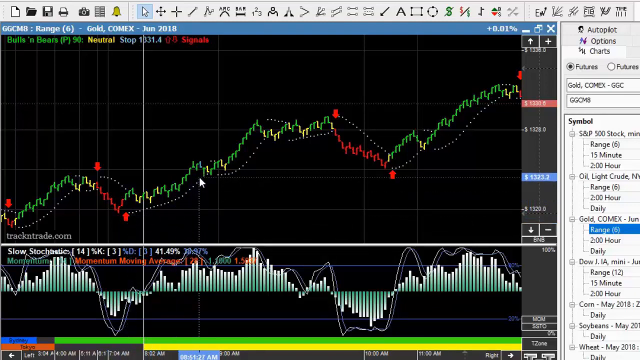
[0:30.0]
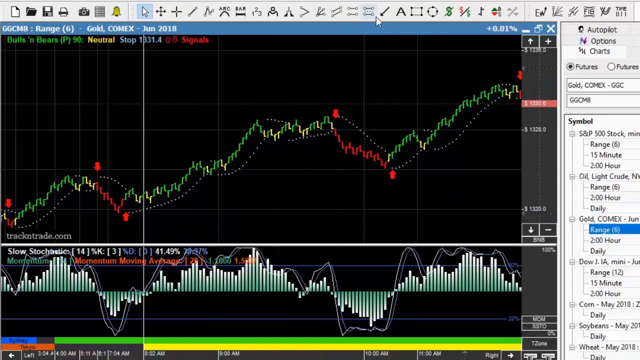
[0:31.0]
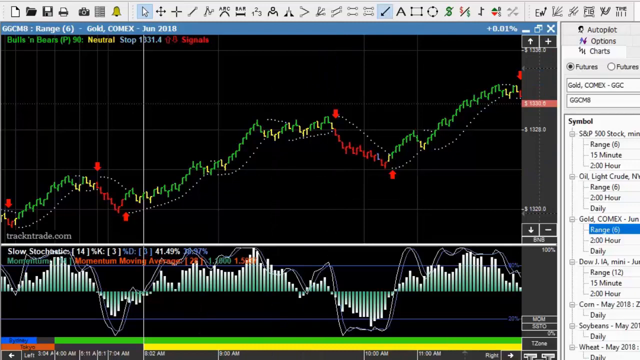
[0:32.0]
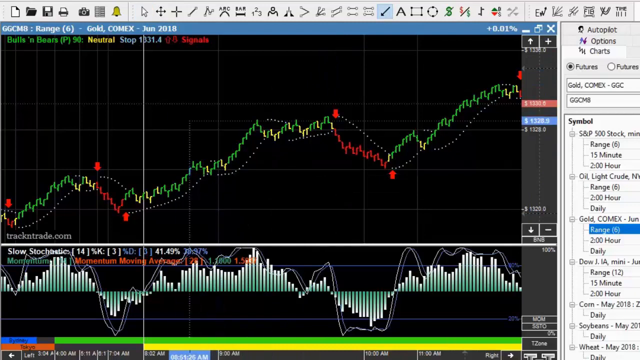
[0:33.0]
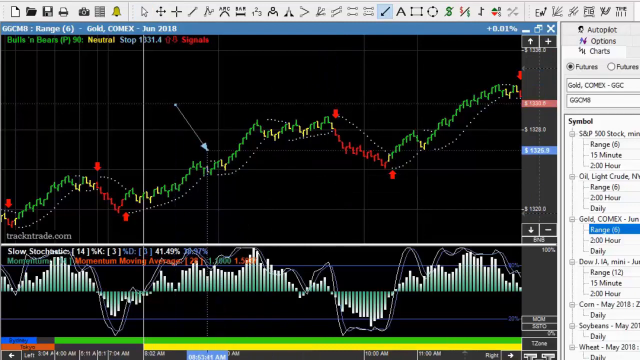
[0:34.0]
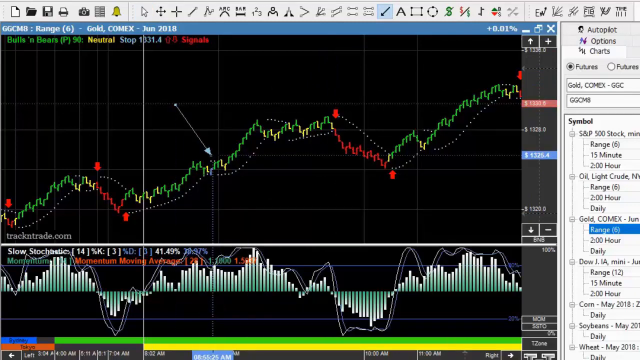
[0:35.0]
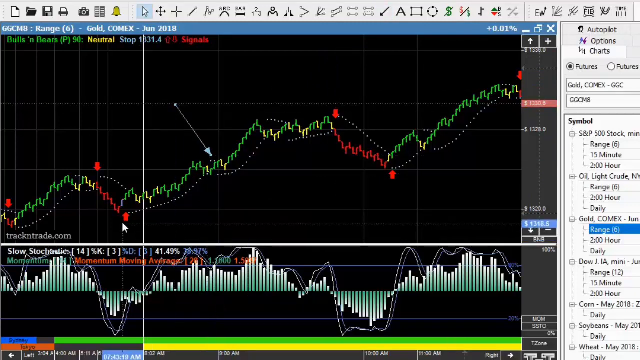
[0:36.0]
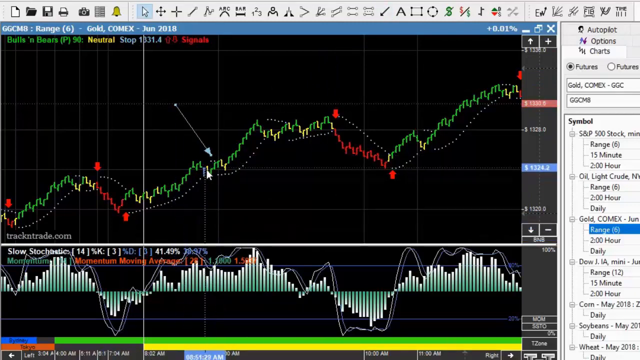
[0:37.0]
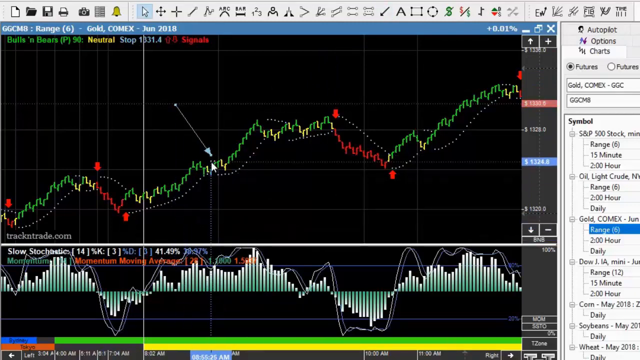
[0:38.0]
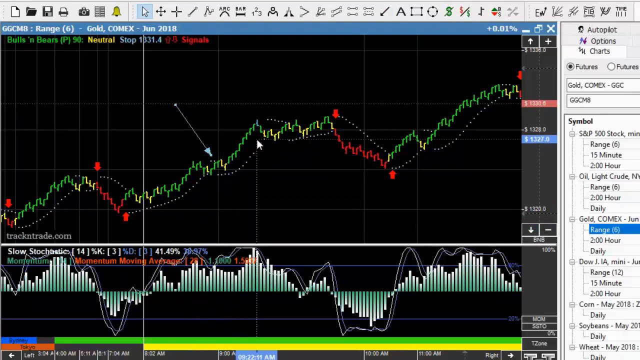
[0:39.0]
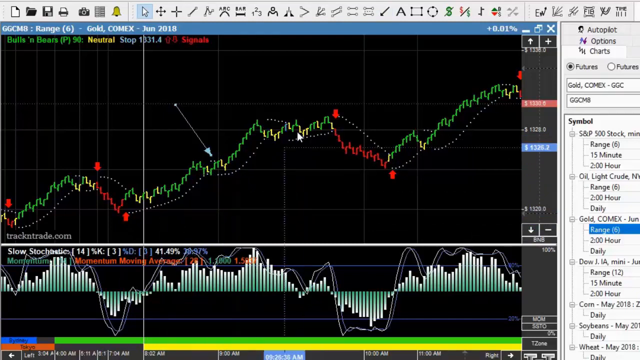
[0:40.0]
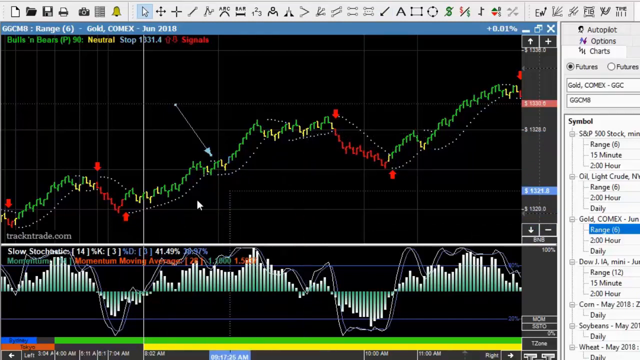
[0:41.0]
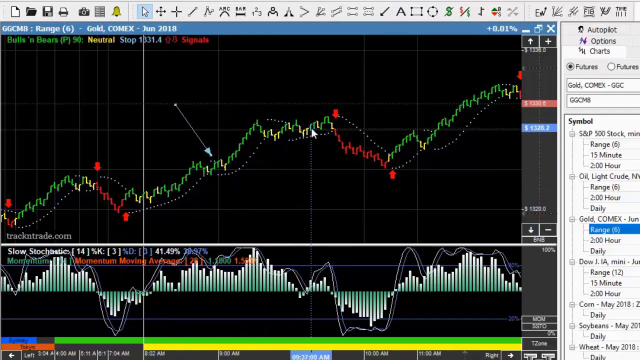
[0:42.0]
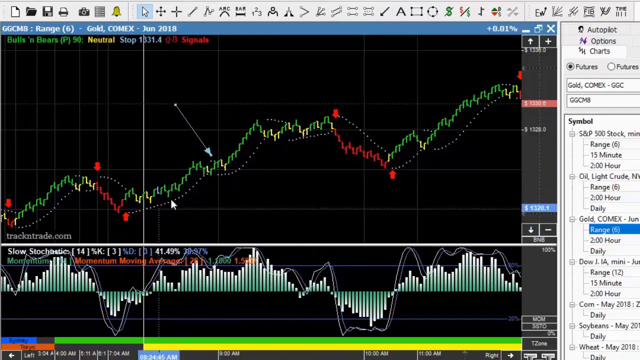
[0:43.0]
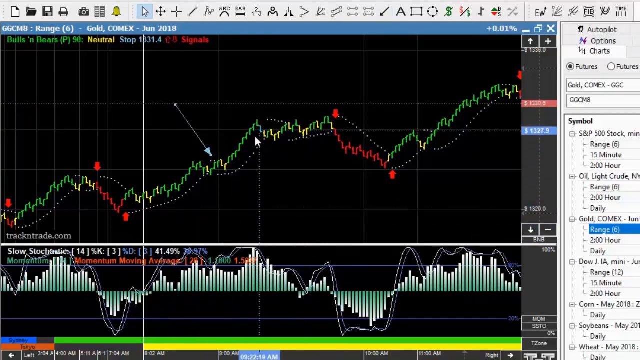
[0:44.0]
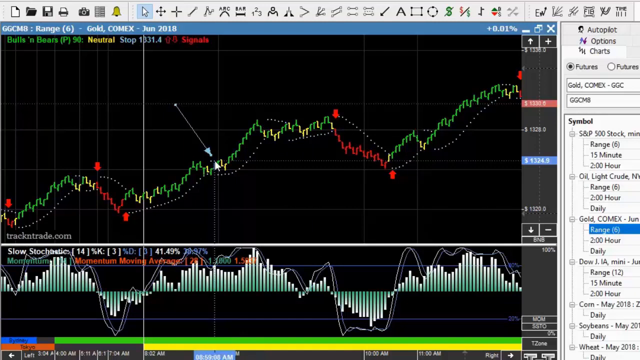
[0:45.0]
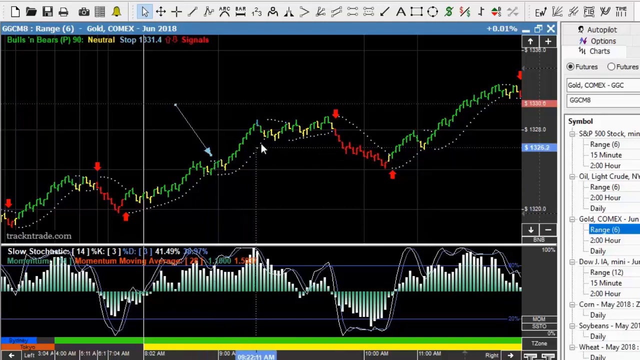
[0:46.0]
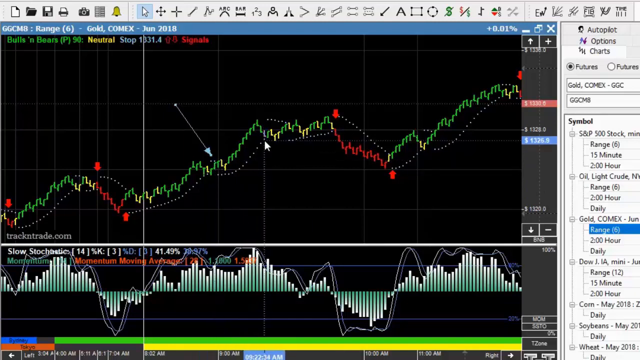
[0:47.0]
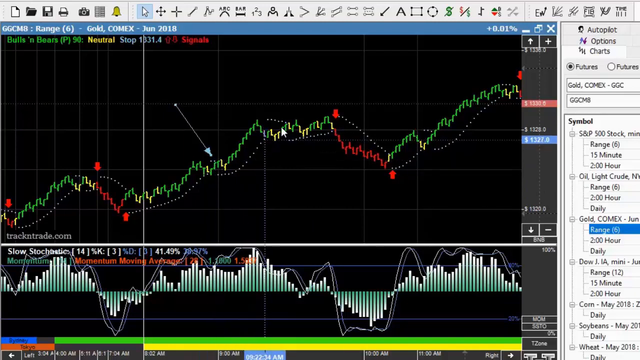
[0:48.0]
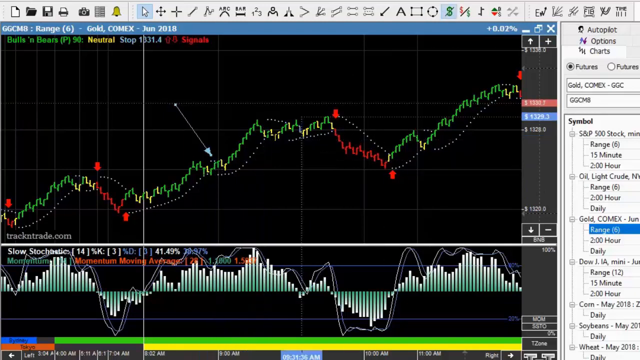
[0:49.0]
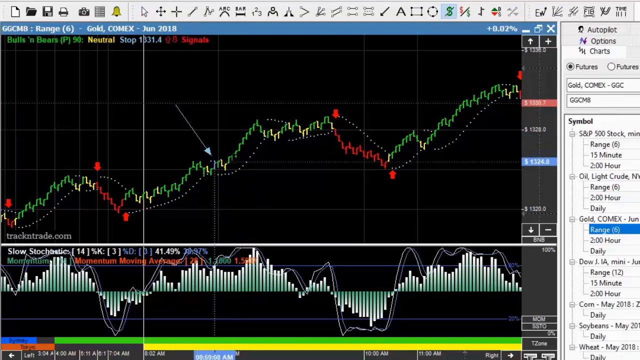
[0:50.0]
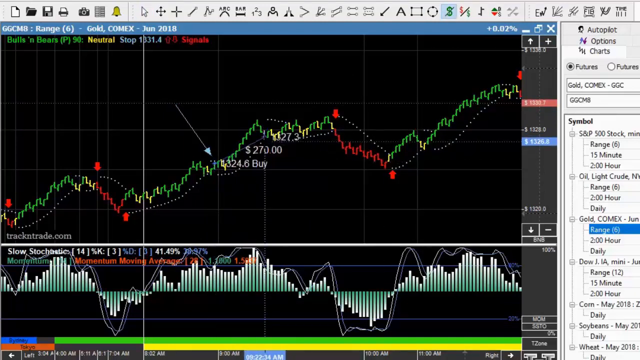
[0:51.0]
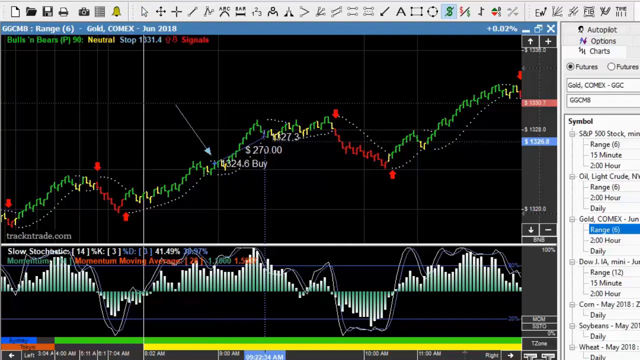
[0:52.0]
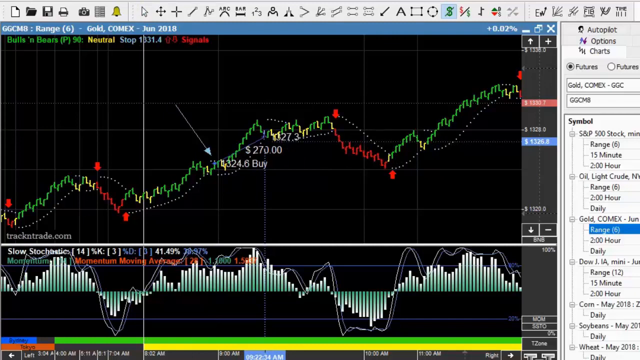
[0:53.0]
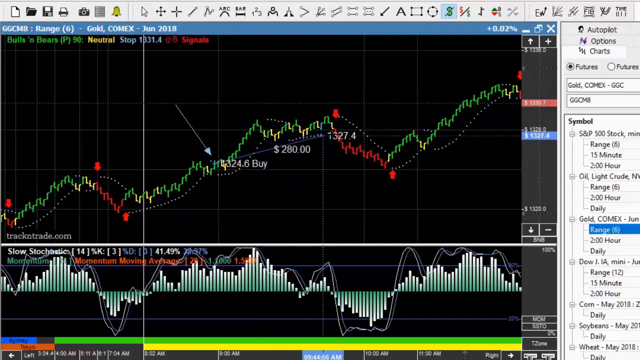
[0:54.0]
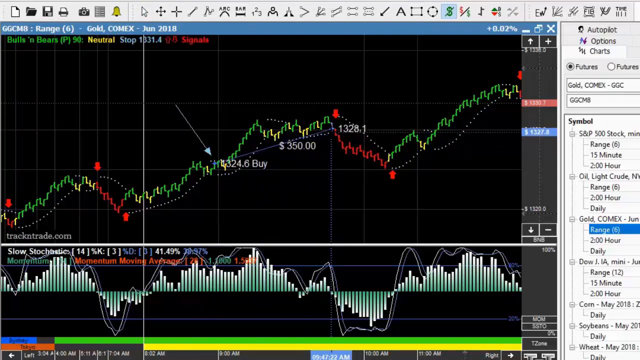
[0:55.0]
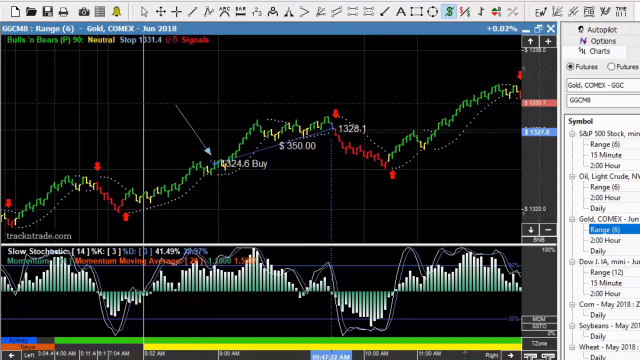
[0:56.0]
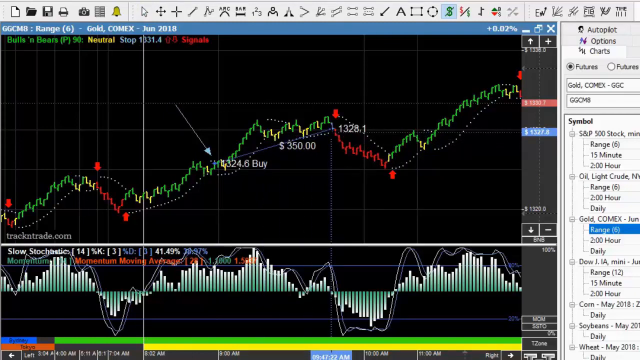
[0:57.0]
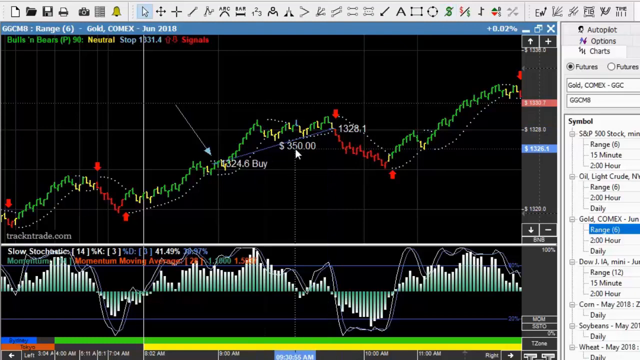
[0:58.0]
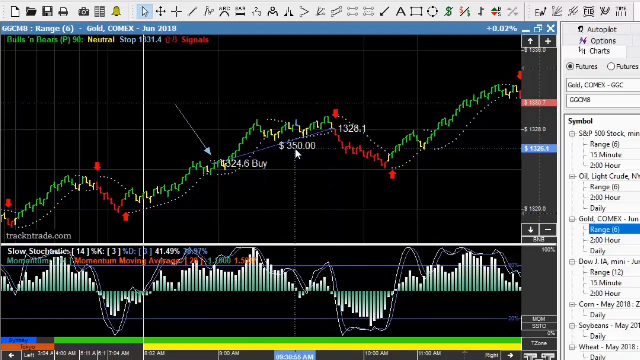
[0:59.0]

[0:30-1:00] A black screen shows a green, red and yellow graph that starts on the left and rises to the right. The mouse cursor moves up and to the right to a tool that looks like a drawing tool, highlights it and clicks on it. It then goes back down to the graph and begins drawing, drawing down and to the right so that the line appears to point at the graph. The cursor moves down to the left, back up to the area it drew, up again and then juts down, then goes further to the right and back down, moving back and forth between roughly the middle of the chart and the graph. It focuses on the point it drew before moving right and then to the very top. It then begins drawing and dragging, and a bar appears that shows dollar amounts on the screen.